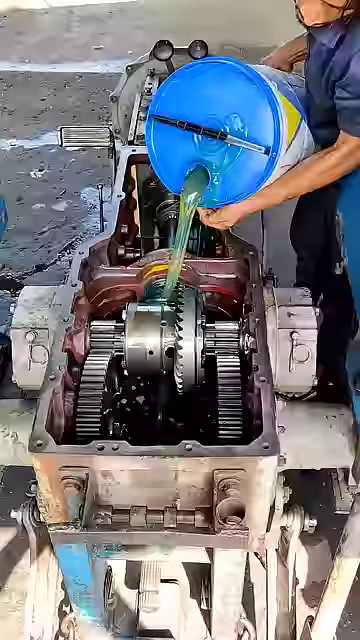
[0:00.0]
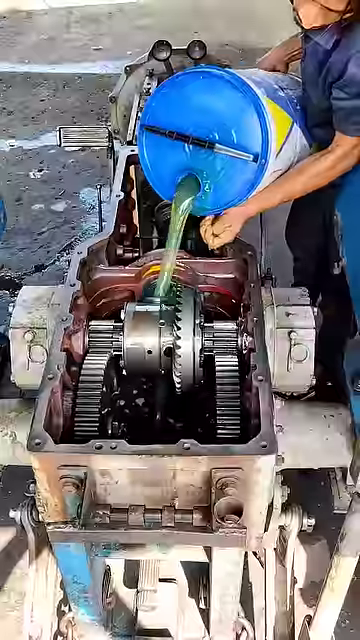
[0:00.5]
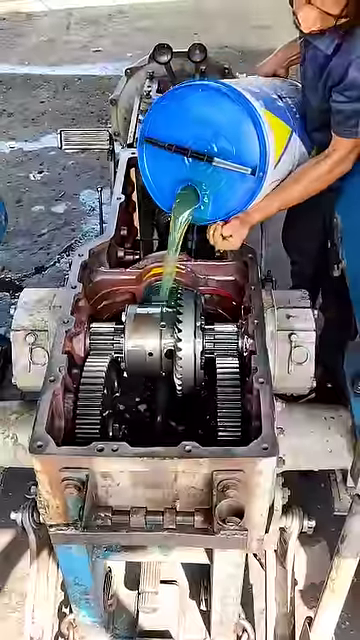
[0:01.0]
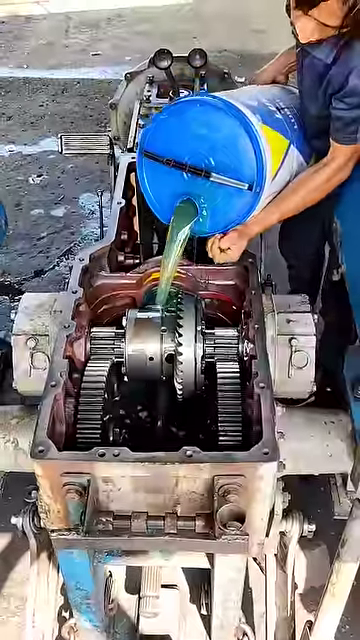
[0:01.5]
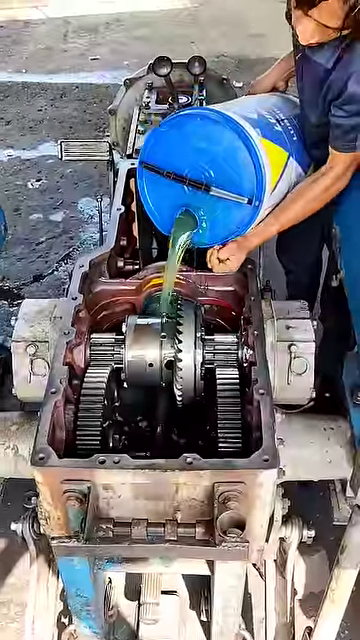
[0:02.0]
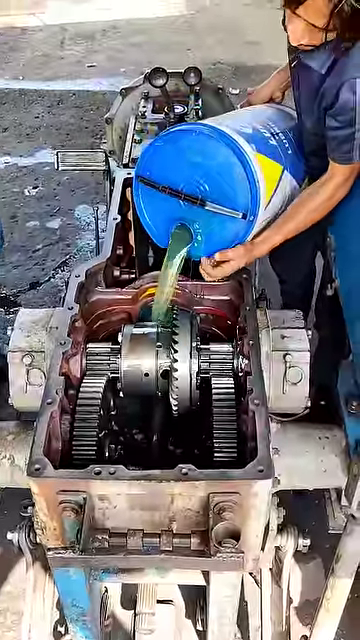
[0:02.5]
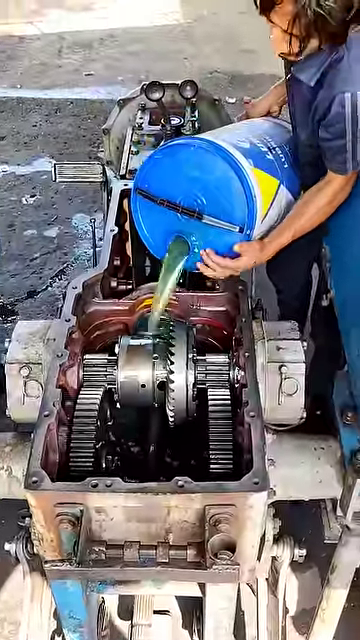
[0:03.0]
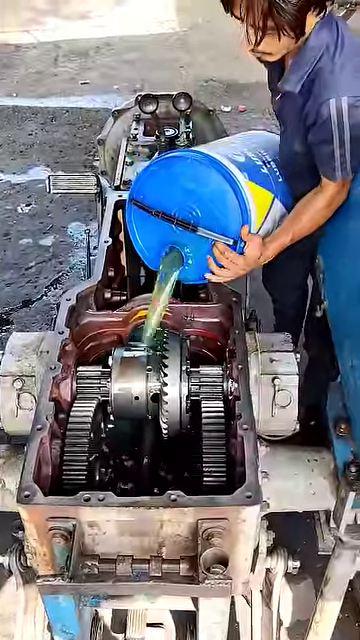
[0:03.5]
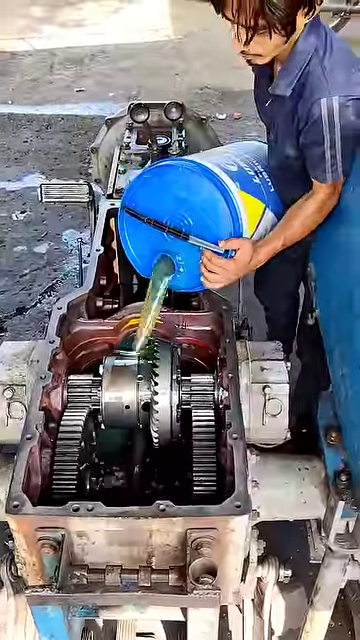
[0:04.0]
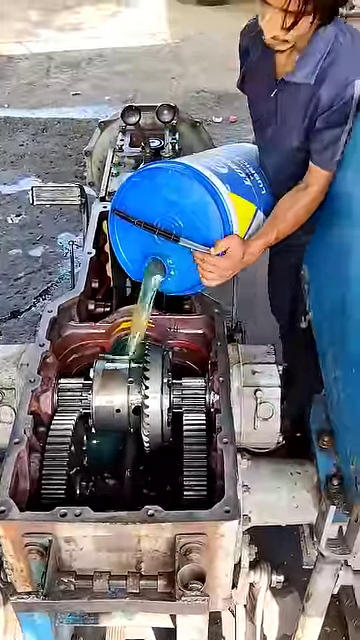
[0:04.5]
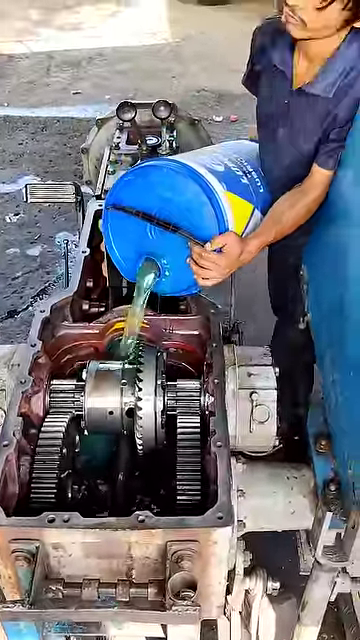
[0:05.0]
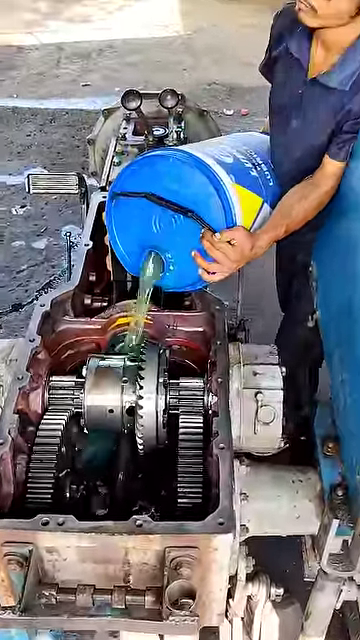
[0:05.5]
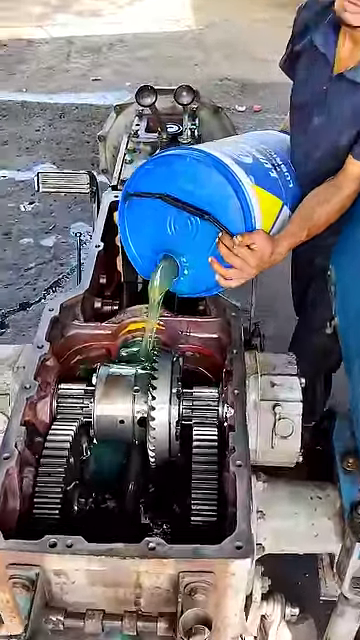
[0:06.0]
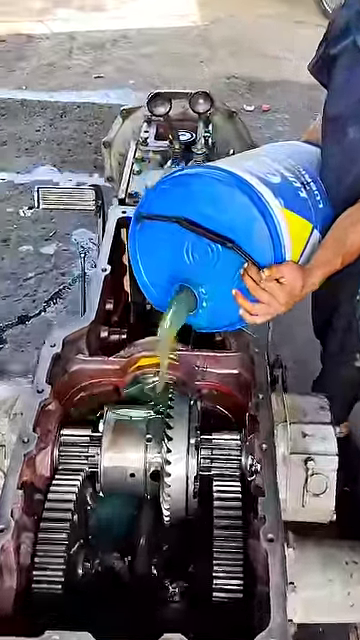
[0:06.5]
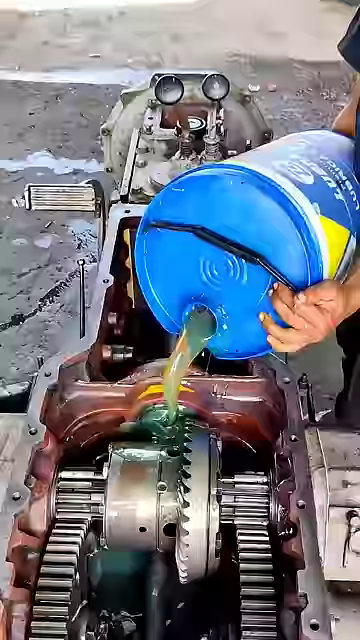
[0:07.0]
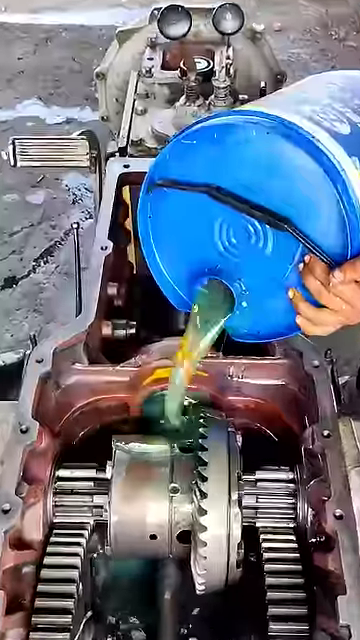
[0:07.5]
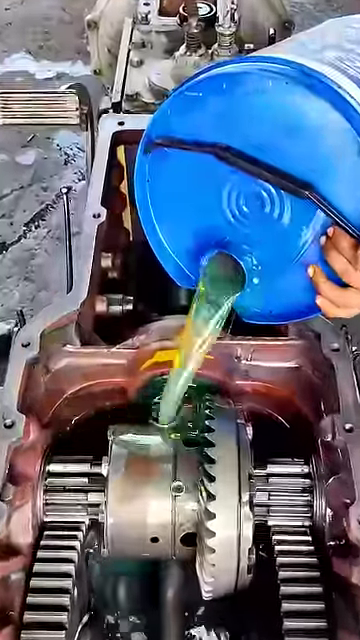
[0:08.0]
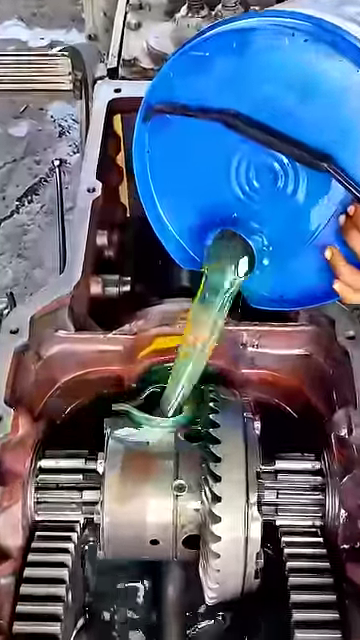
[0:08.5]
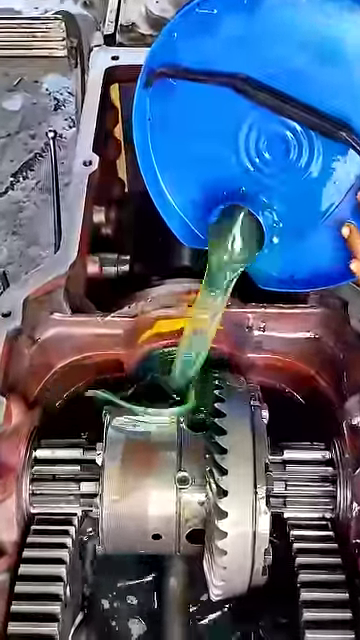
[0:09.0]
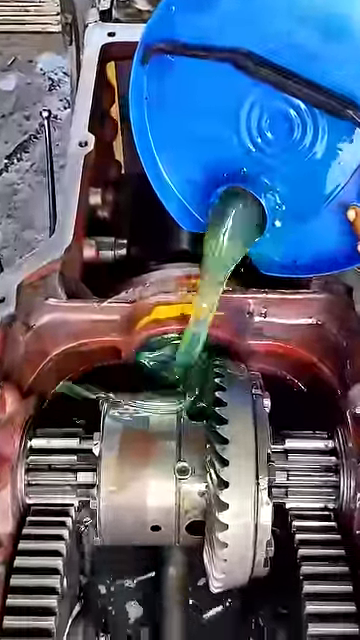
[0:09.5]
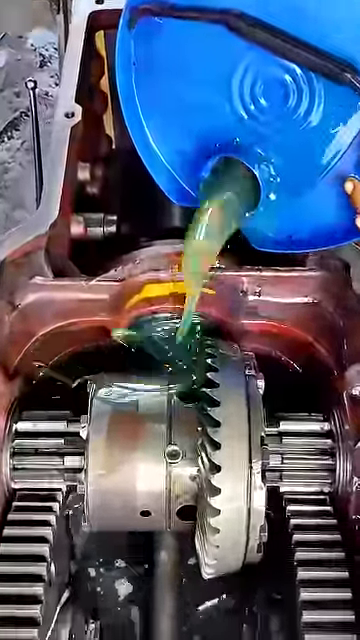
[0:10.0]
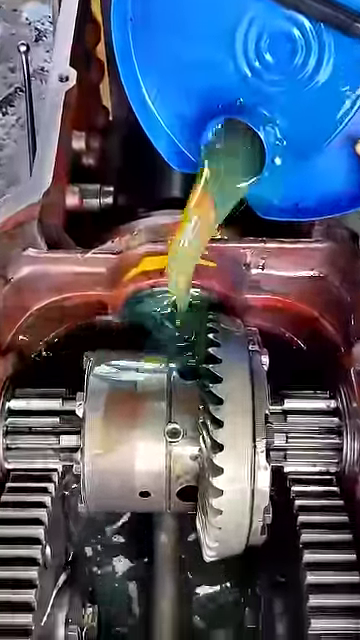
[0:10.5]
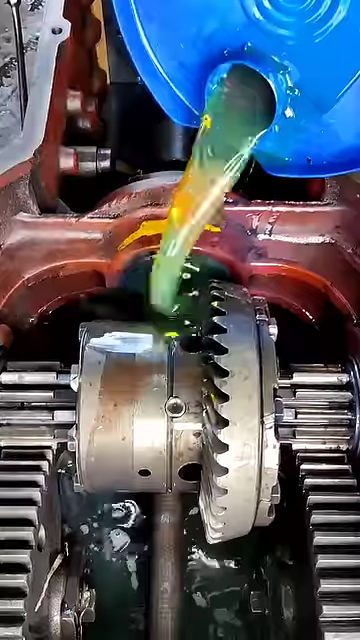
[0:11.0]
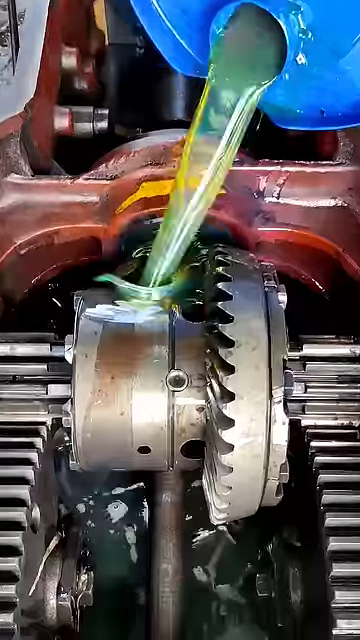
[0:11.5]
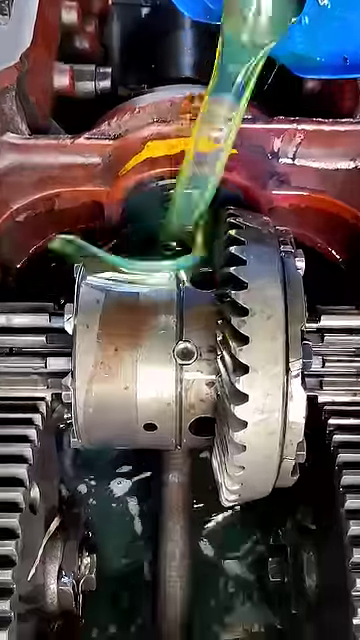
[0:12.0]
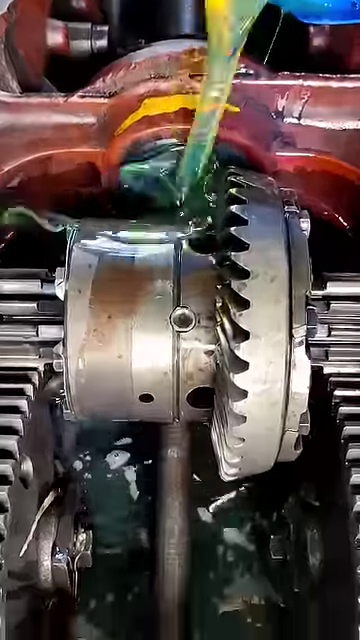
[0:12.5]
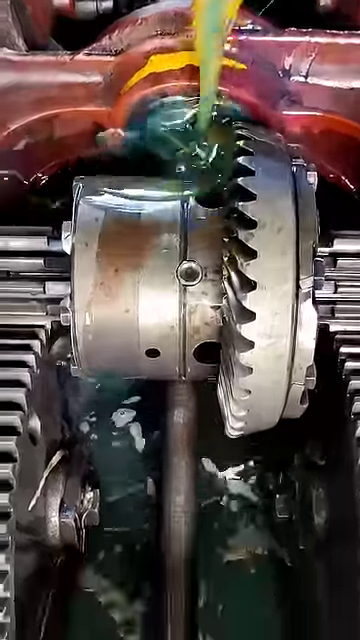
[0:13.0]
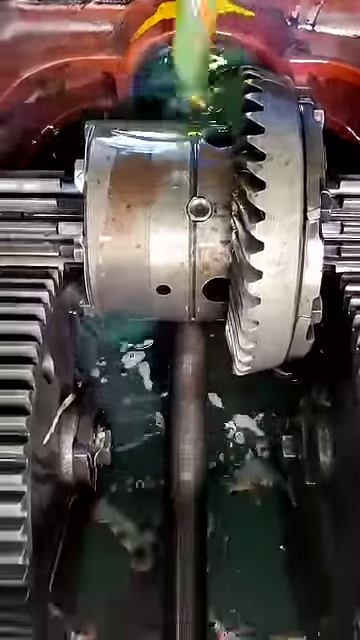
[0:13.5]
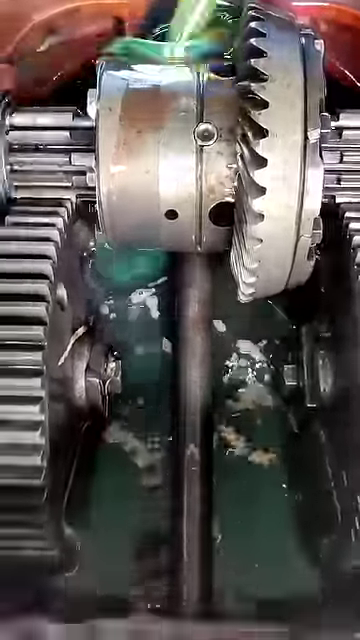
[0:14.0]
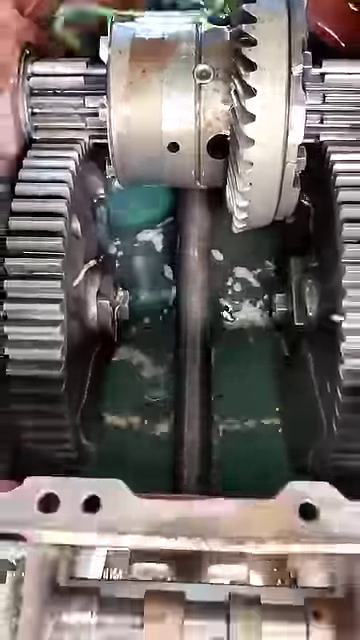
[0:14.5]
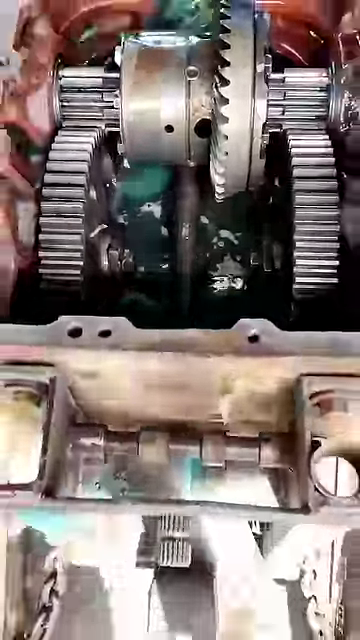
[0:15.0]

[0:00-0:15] The video appears to be one of those TikTok-style videos in which something is poured into a container. It looks like a mechanic pouring oil onto a motor, possibly to grease it, though this is uncertain: greenish liquid from a big blue drum flows into a mechanical machine. The man doing this looks Indian. He is outside in broad daylight, possibly at work judging by his uniform, which looks like a handyman or mechanic outfit.